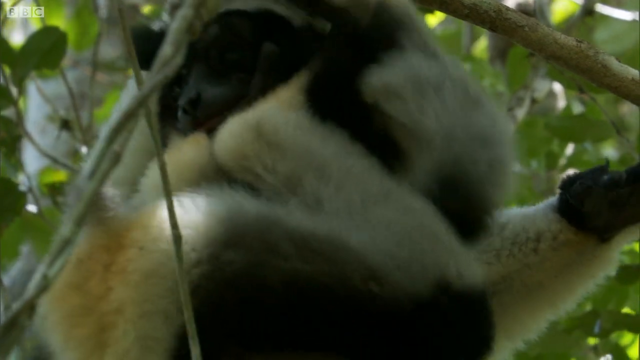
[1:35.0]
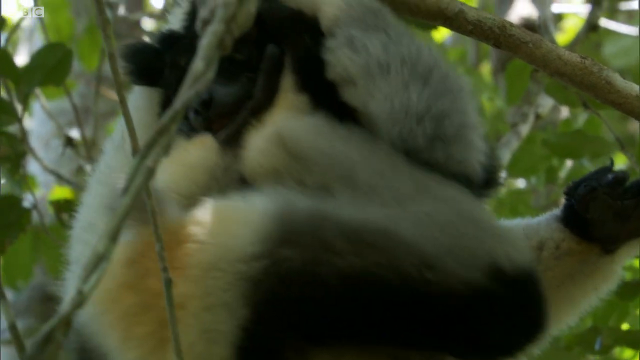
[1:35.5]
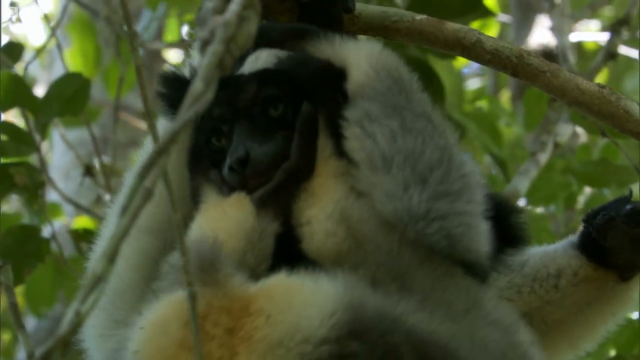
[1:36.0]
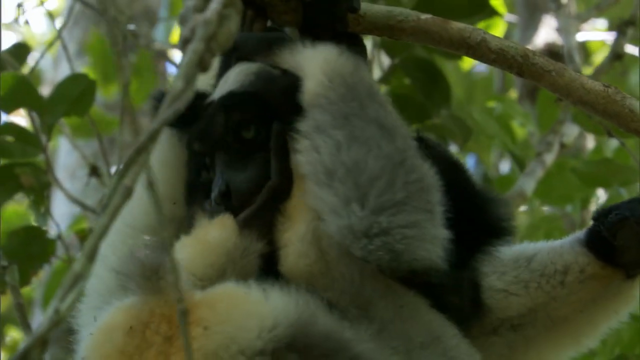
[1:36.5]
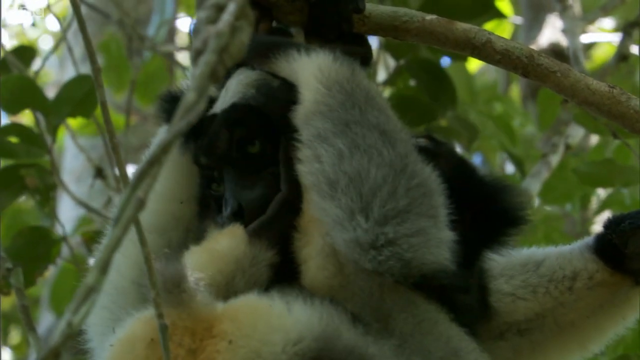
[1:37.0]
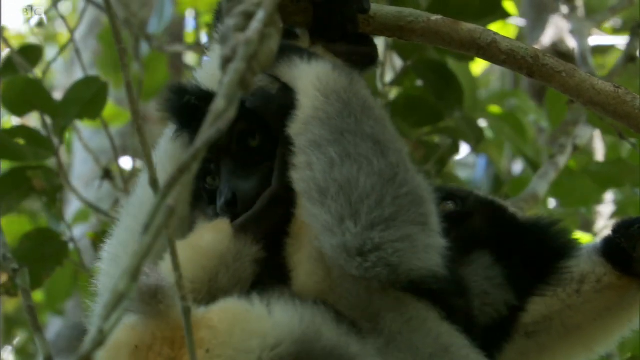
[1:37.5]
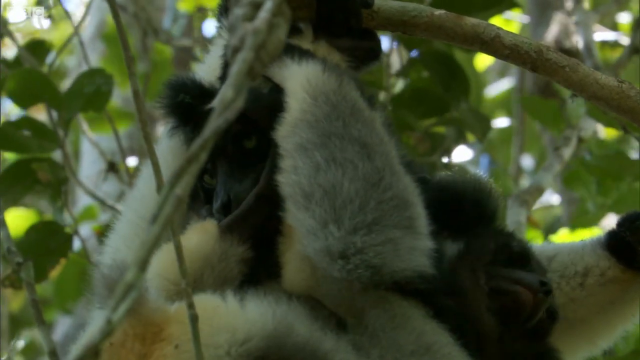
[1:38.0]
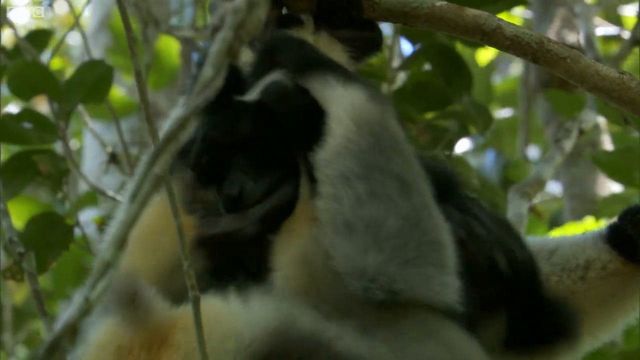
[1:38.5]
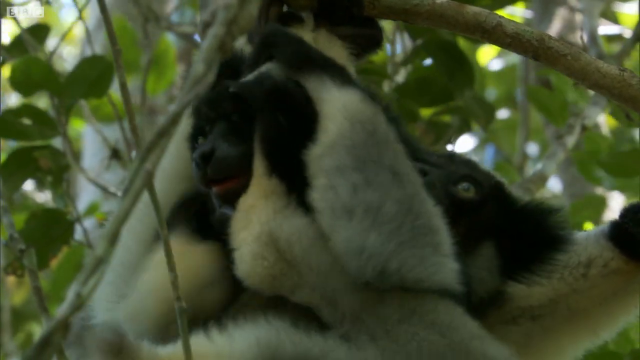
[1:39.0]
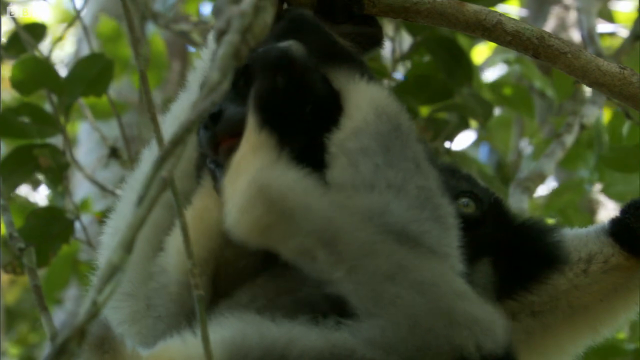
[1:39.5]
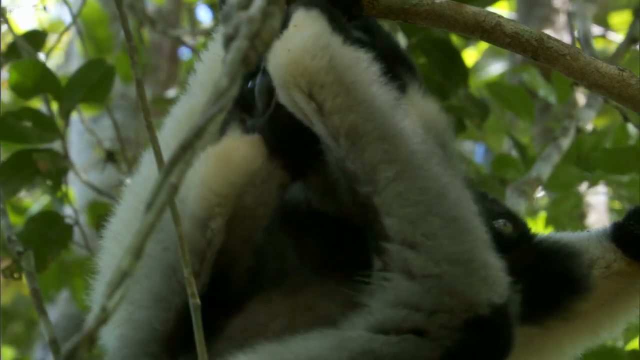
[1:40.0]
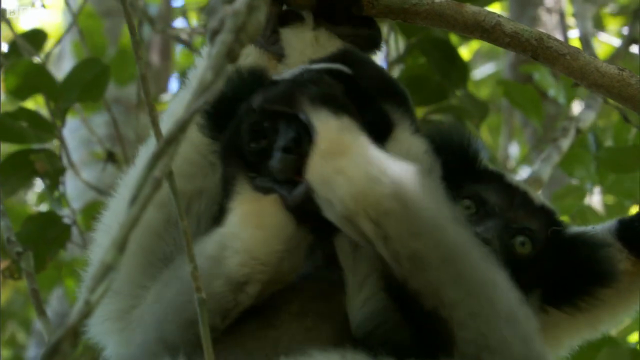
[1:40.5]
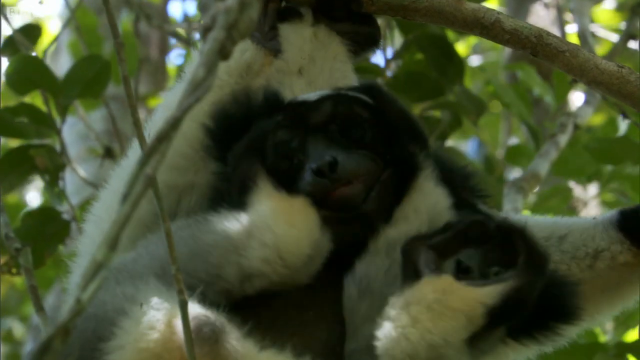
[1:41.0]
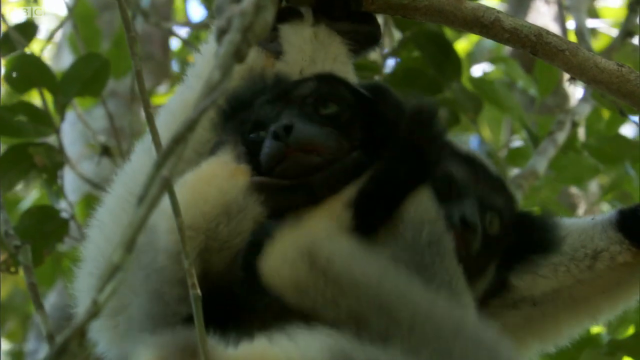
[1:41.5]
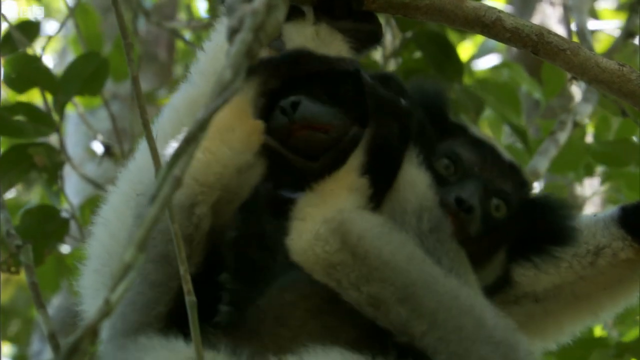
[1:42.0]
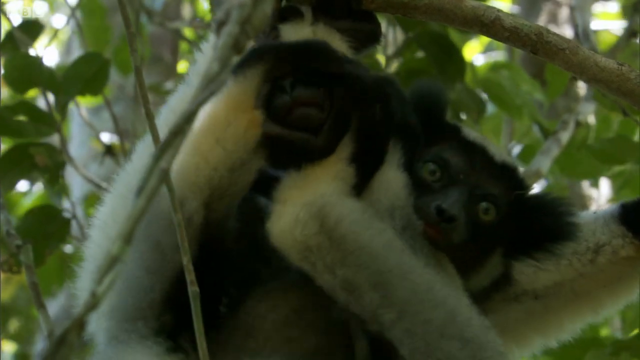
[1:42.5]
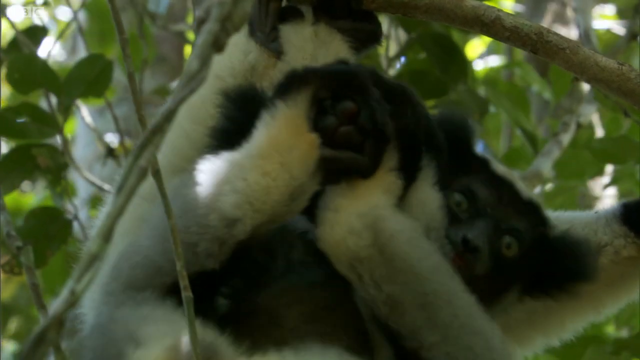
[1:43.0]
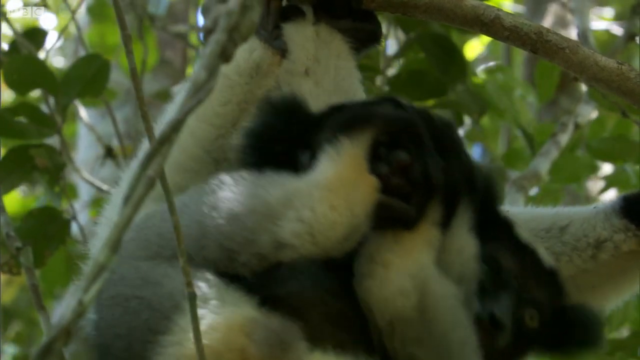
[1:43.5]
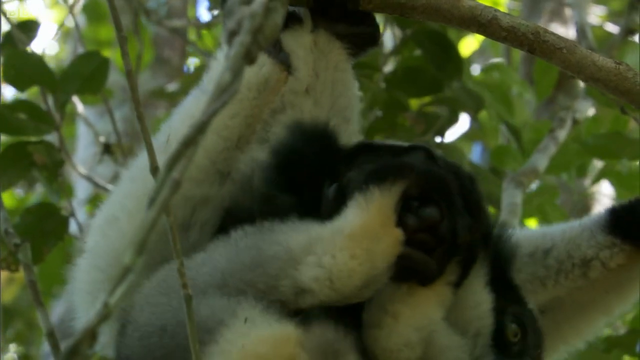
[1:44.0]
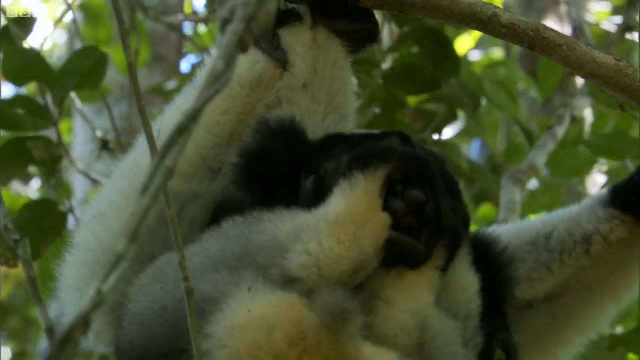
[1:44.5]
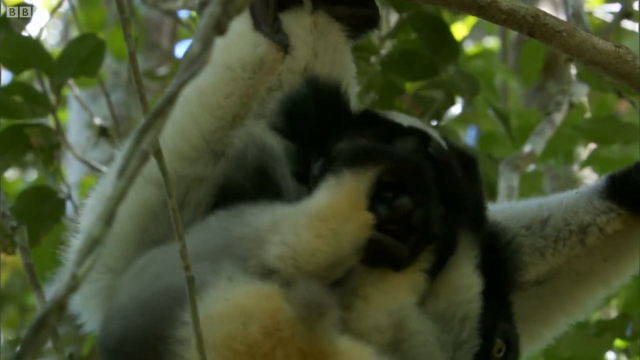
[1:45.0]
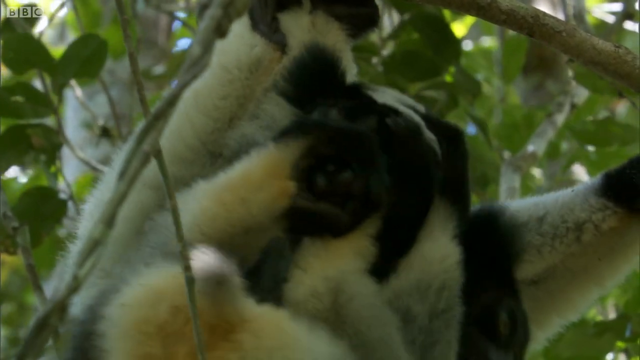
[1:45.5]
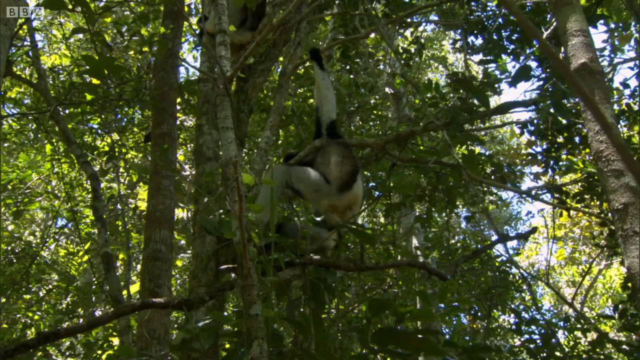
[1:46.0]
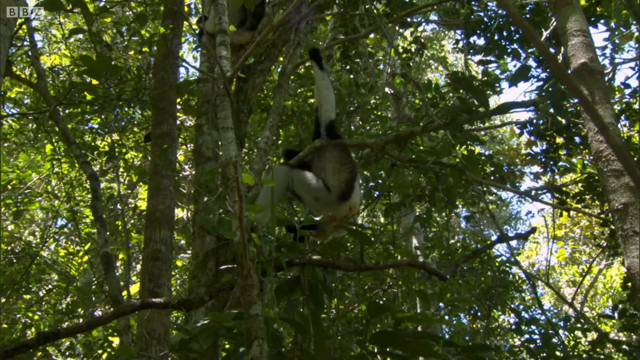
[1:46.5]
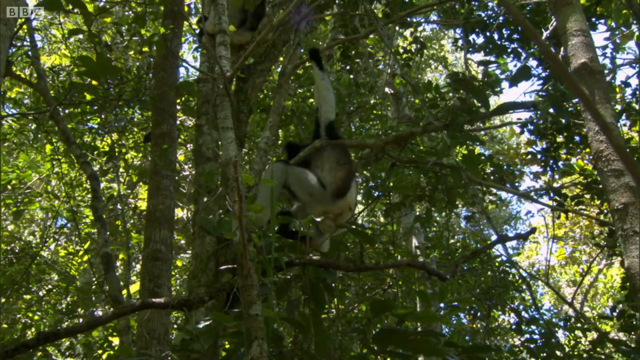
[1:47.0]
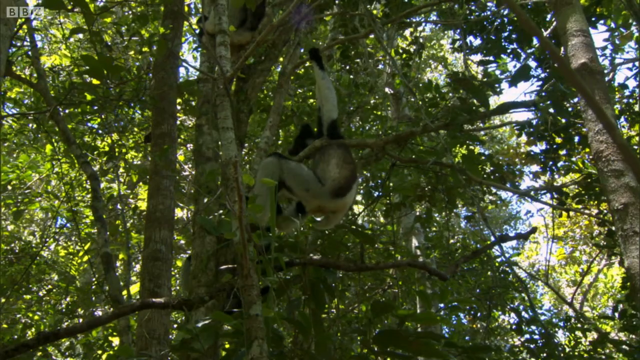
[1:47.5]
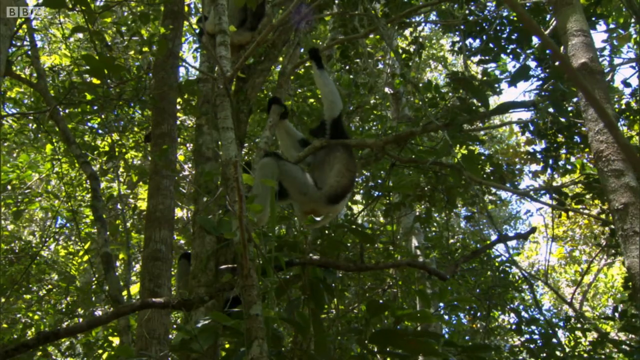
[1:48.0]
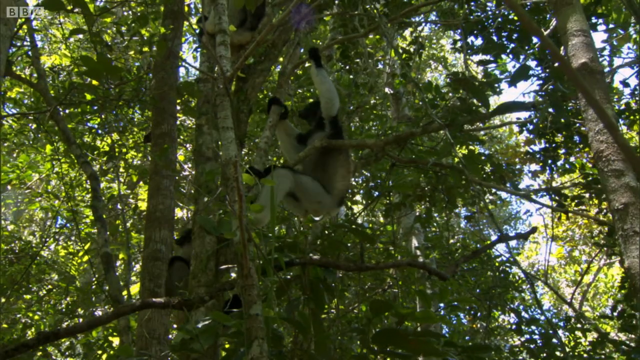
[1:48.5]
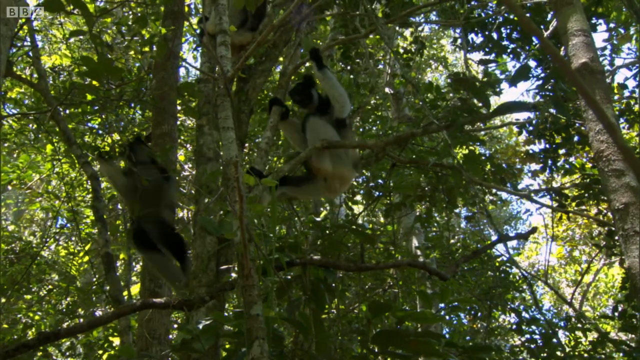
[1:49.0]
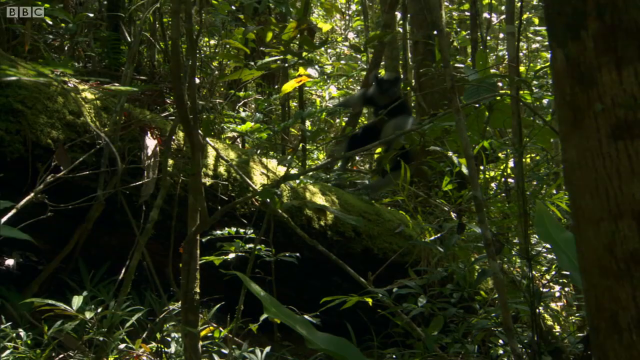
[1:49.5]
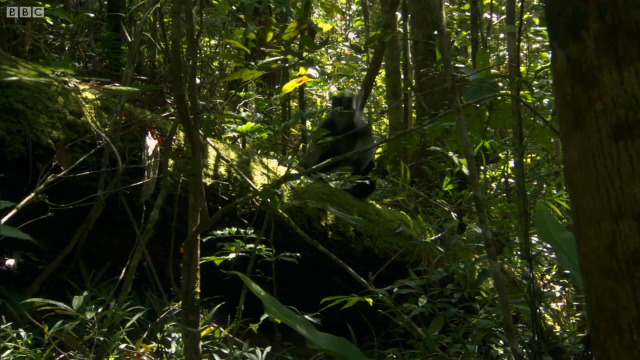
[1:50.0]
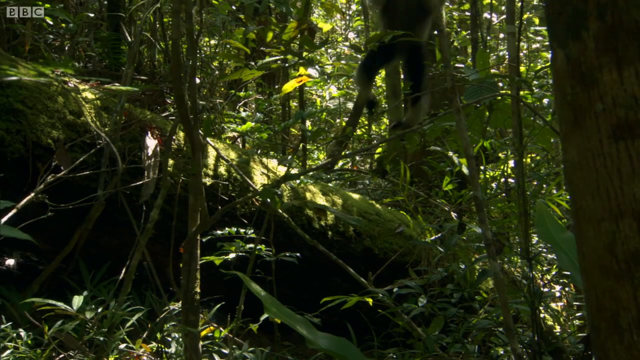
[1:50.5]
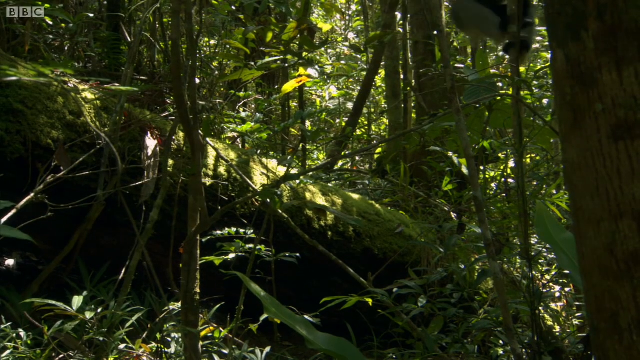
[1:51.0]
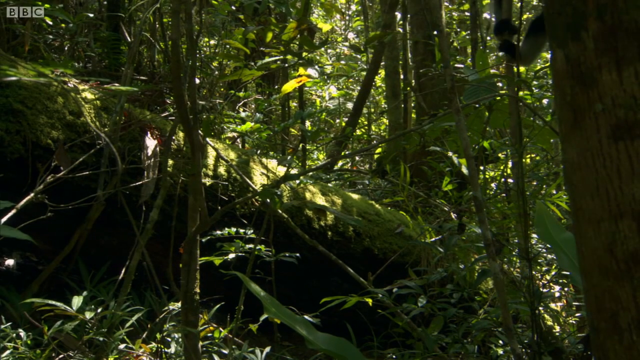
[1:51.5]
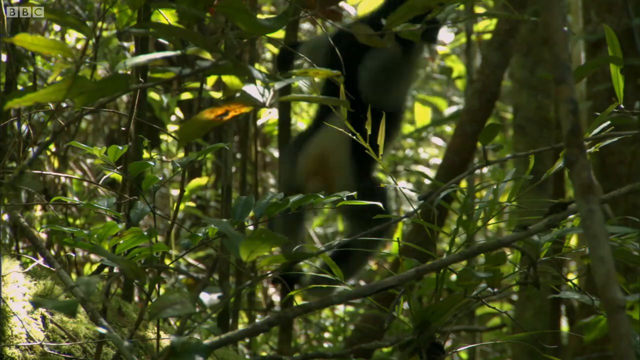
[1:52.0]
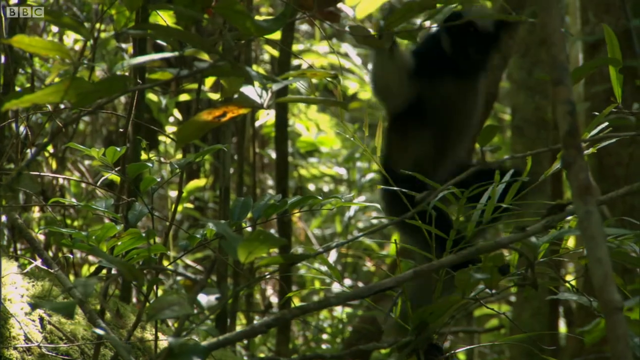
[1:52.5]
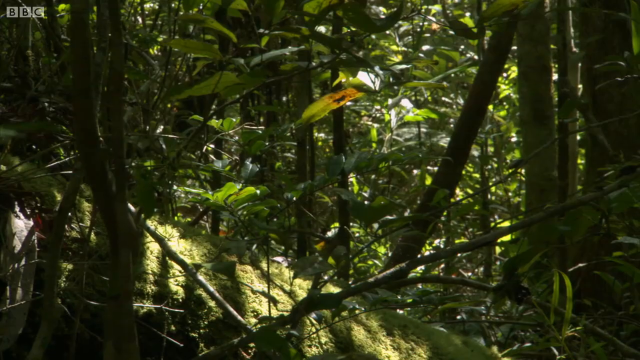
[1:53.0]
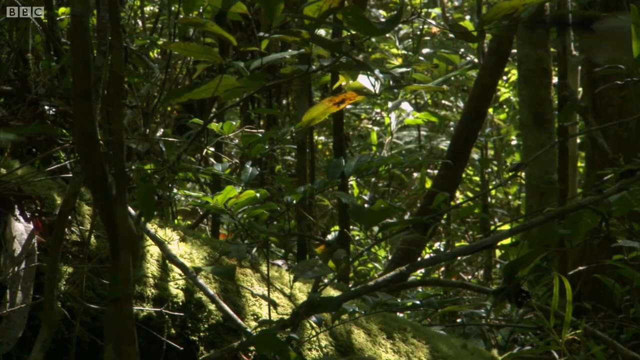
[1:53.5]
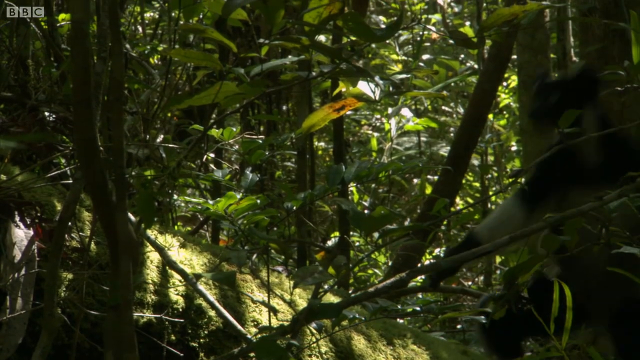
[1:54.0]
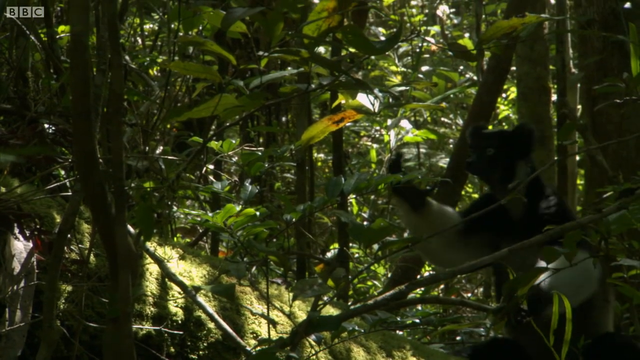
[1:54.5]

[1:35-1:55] Among densely packed trees, a close-up shows two lemurs. One grabs the other and has its feet around the other's face, moving it back and forth; the other lemur is not really disturbed. The camera then backs away, and one lemur shimmies down the branch and starts leaping from tree to tree, grabbing different branches as it jumps across the forest. Blue sky with a few white clouds is visible in the background, and the forest is very green and densely packed. A moss-covered log is on the forest floor.